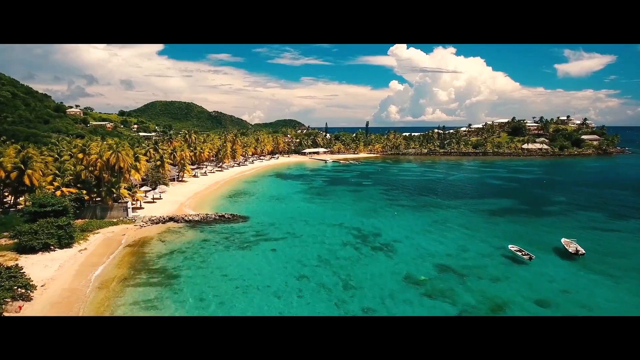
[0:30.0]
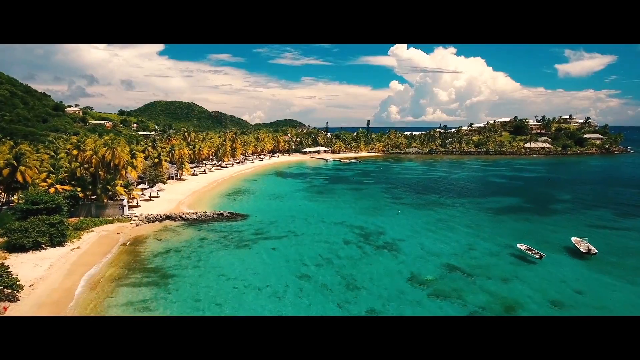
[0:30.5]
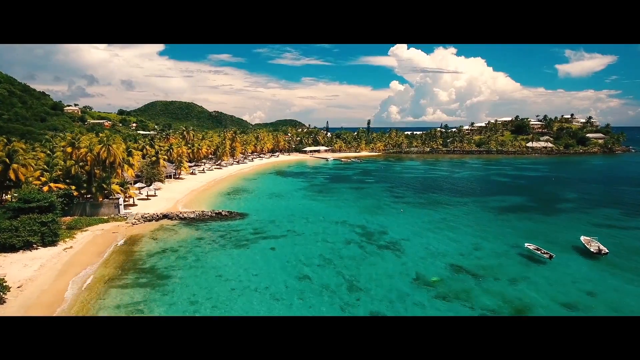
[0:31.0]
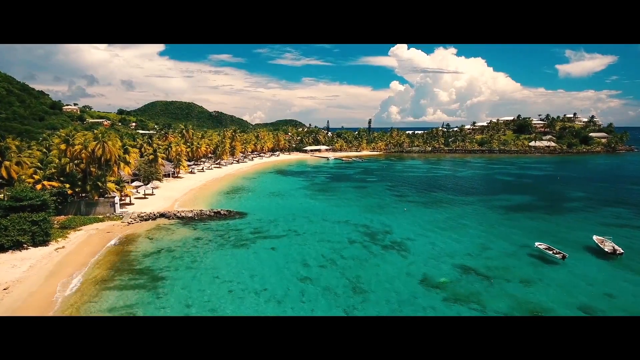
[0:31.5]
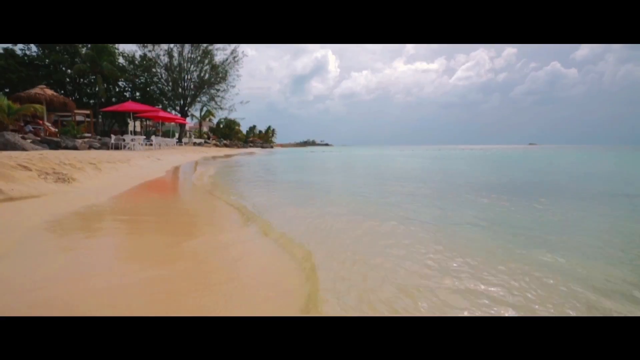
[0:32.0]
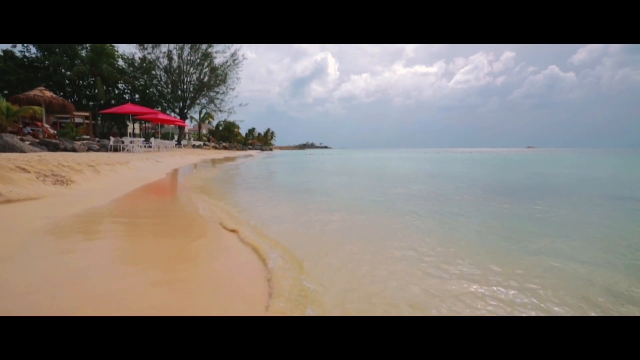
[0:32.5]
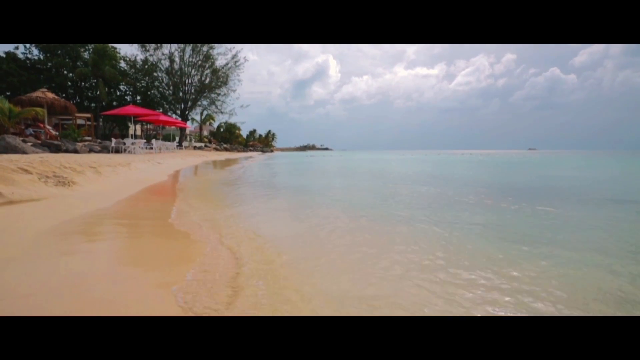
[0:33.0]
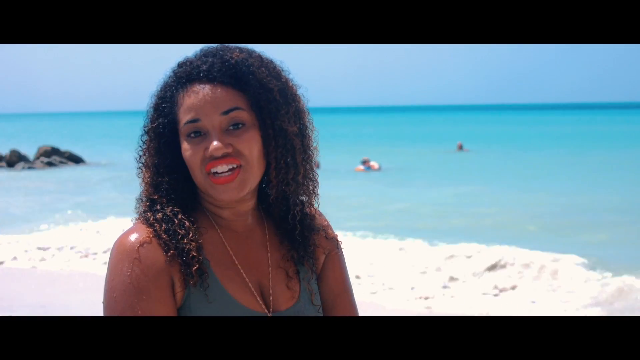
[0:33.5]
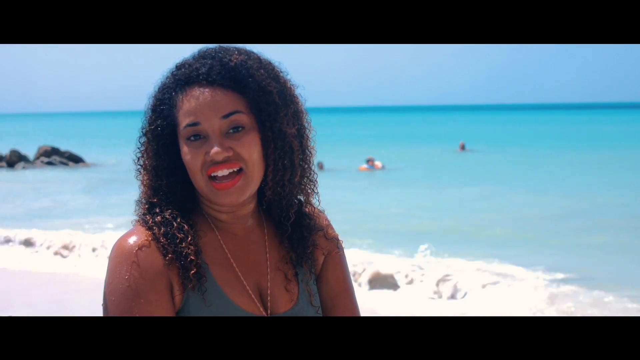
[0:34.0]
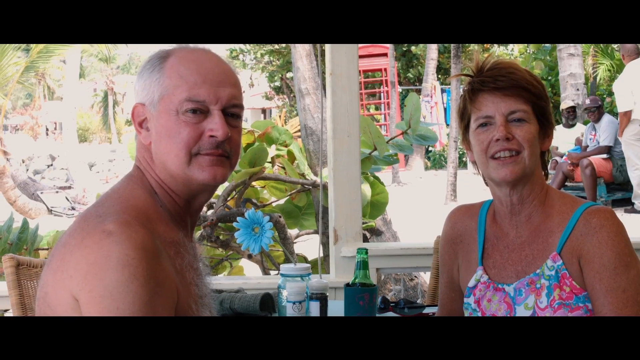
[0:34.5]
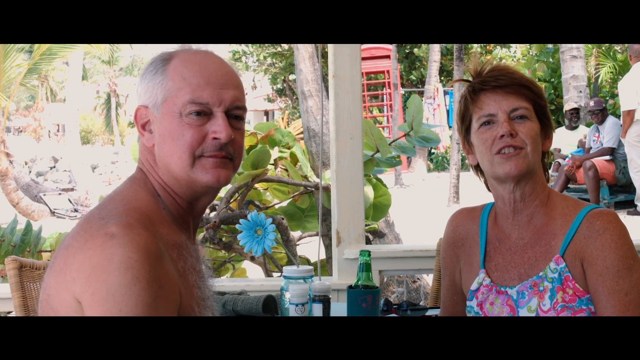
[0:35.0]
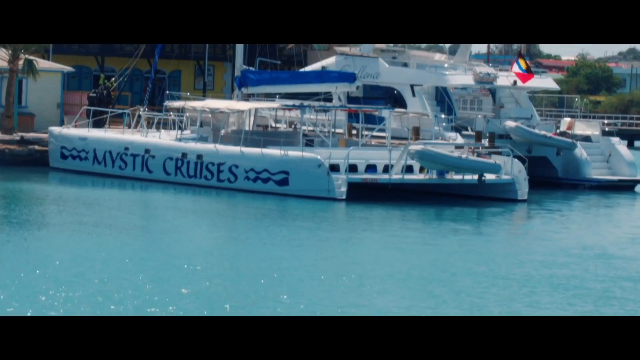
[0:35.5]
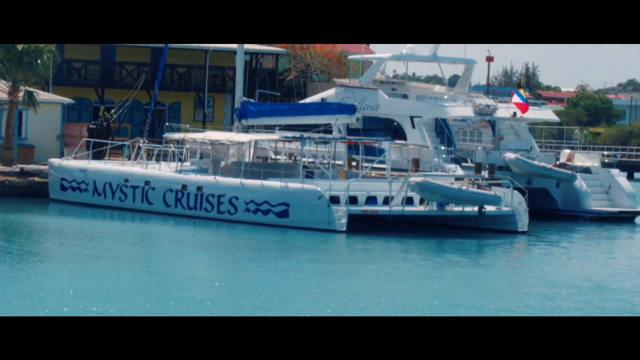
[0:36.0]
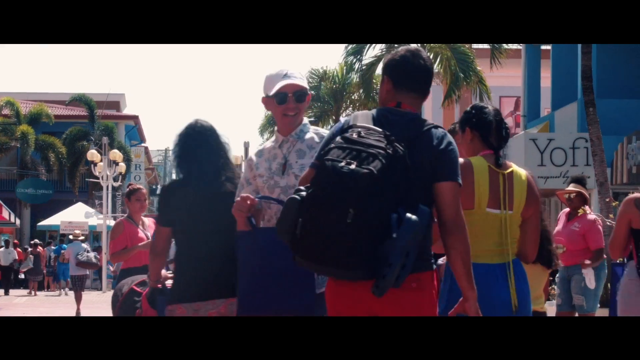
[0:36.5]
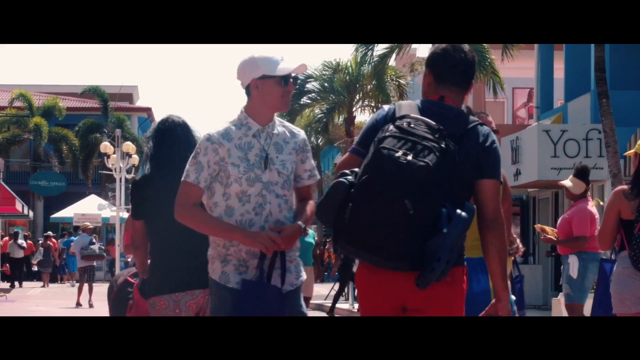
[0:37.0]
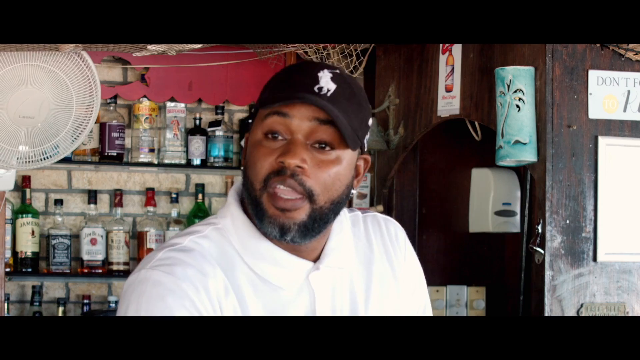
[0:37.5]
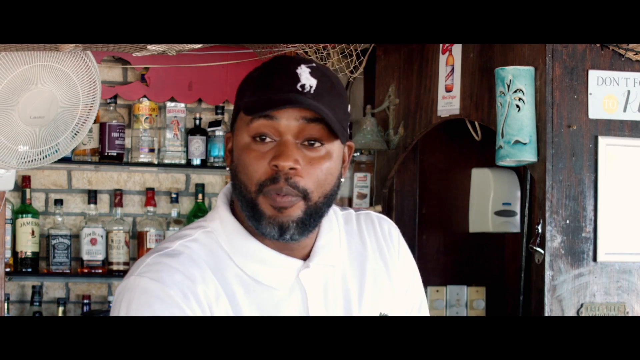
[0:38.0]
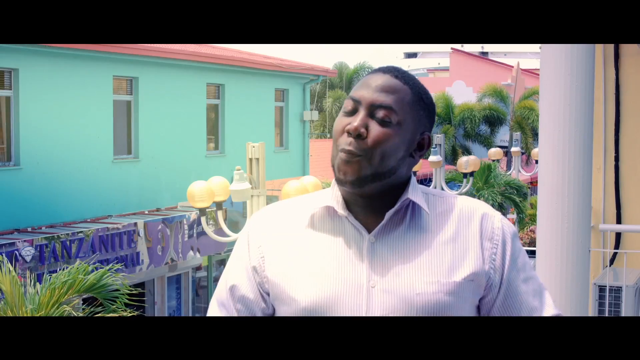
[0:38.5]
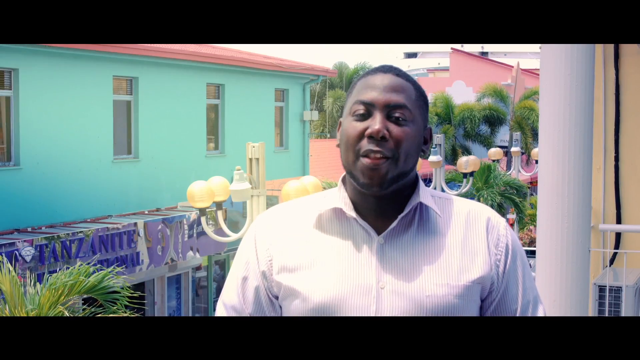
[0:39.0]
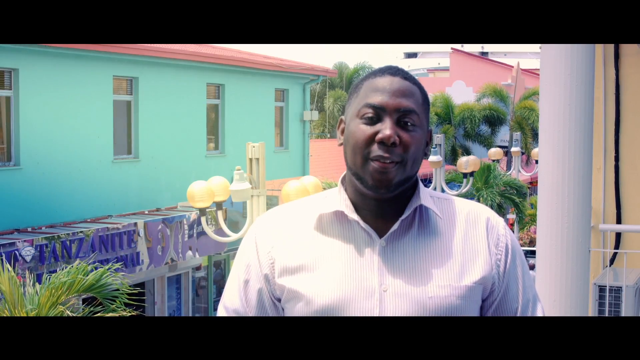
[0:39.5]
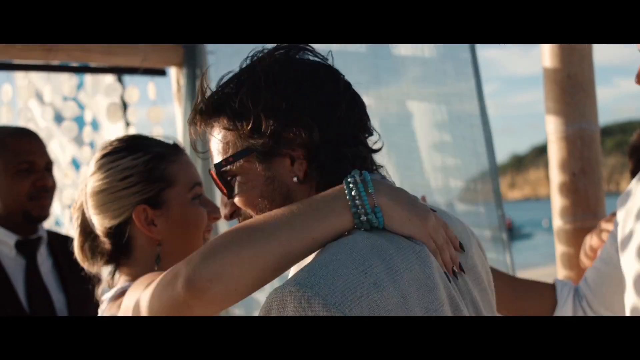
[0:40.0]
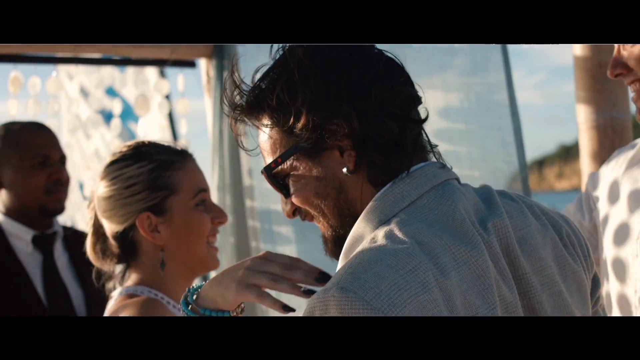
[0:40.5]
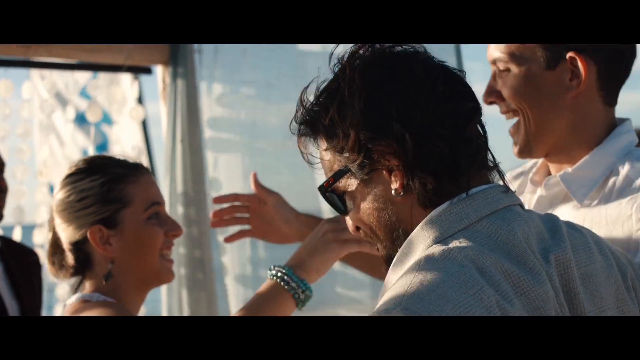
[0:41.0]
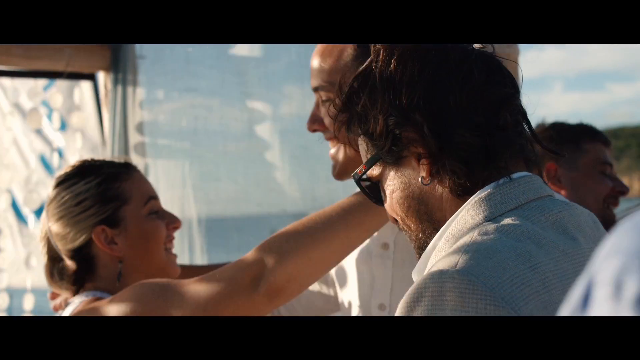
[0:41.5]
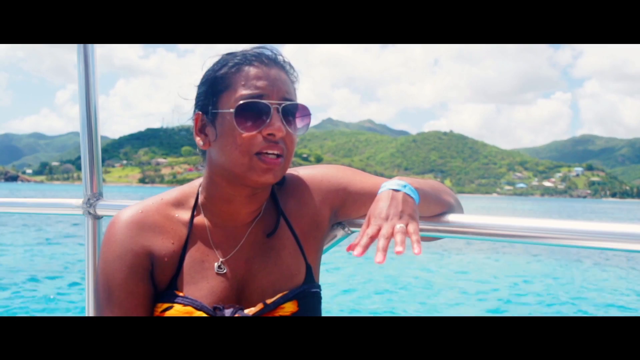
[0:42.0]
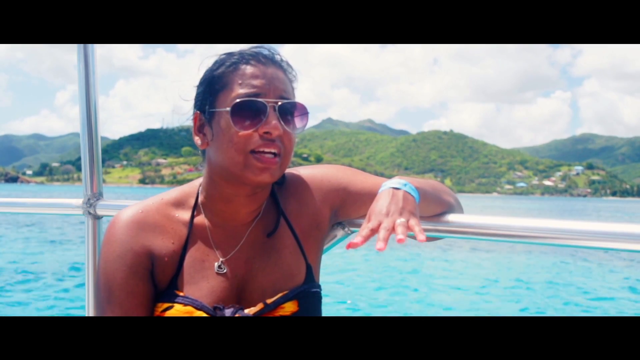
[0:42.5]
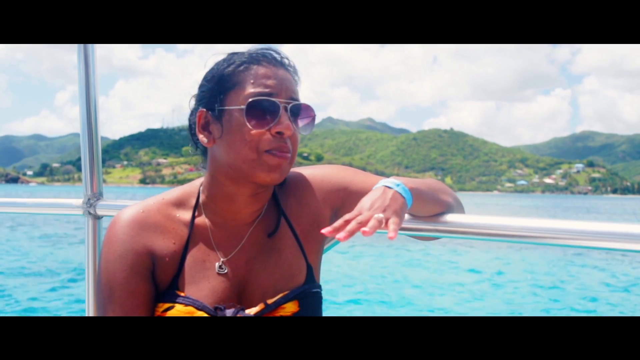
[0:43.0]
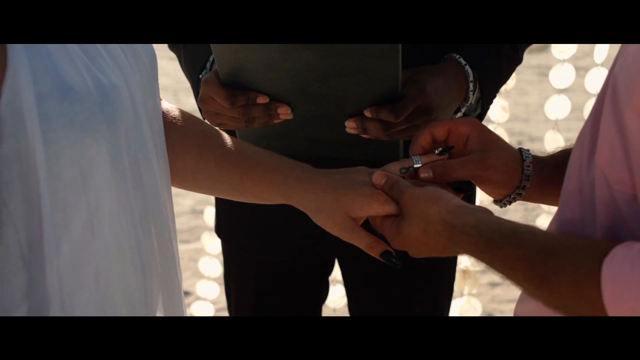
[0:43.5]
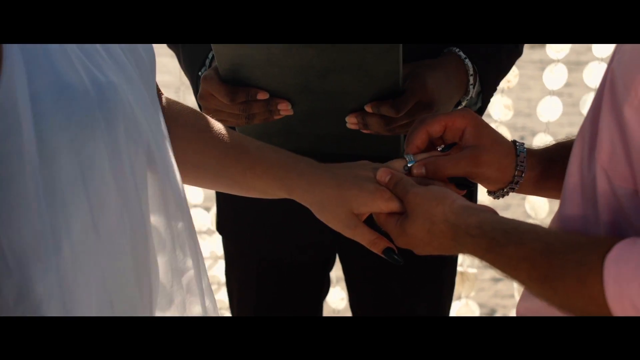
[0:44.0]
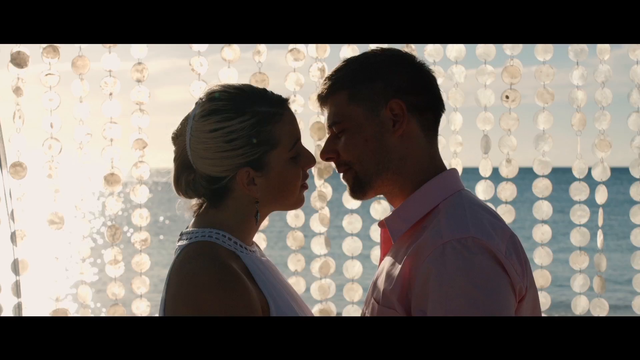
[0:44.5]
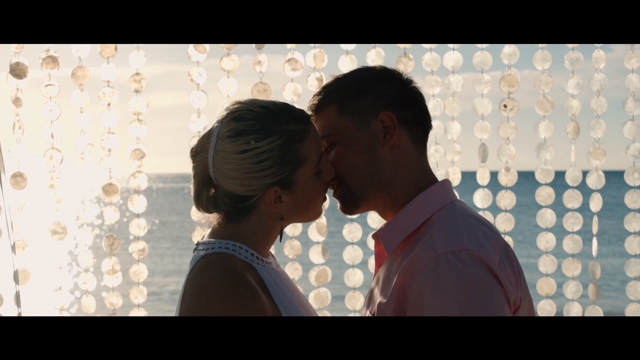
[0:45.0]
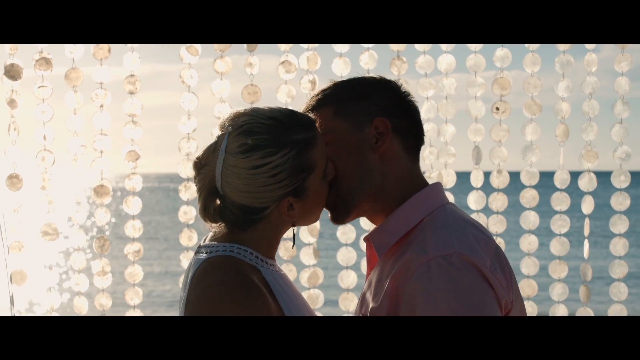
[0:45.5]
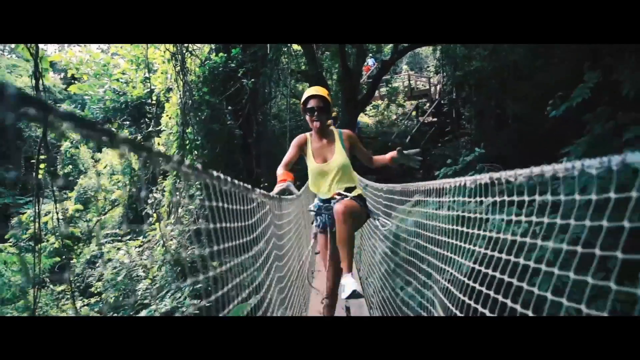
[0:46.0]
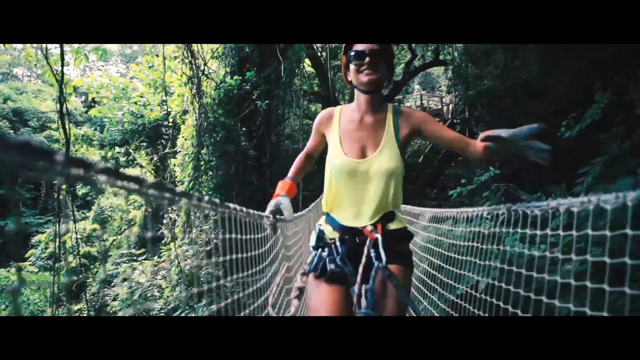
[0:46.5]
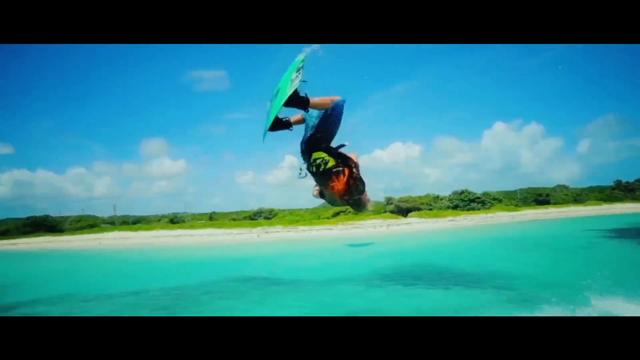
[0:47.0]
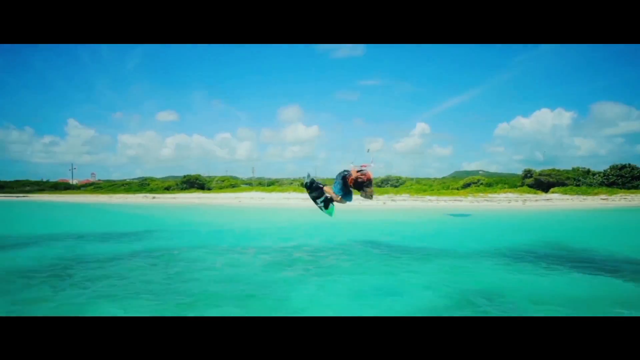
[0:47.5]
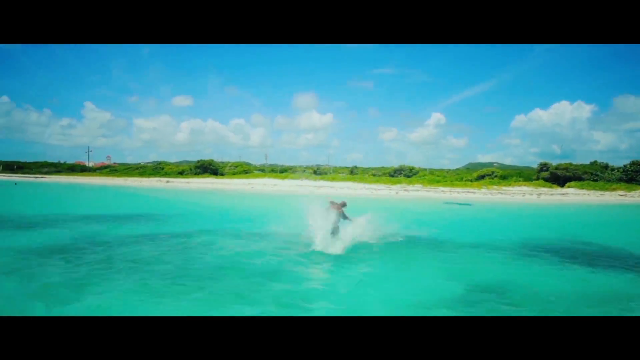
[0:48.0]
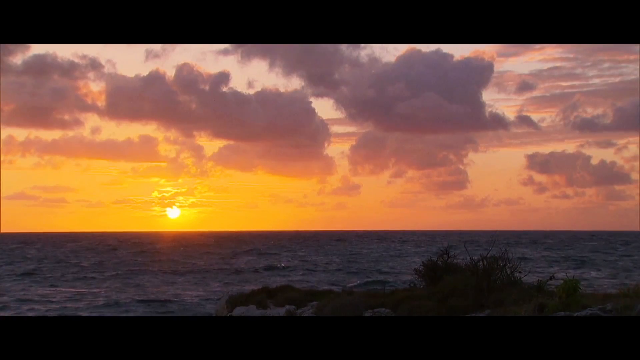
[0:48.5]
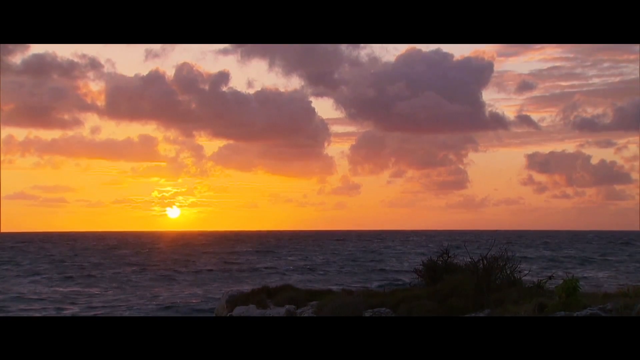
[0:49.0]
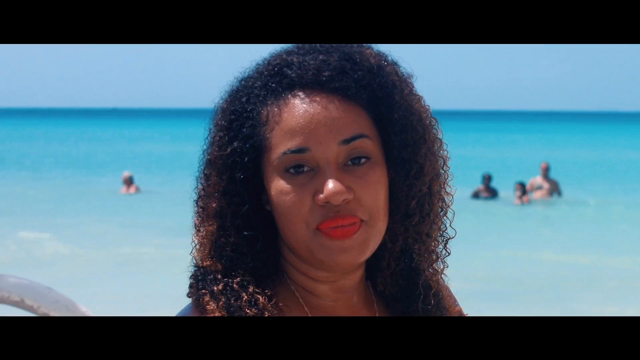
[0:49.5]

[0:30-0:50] A Caribbean island shore appears with blue tropical water, sand, palm trees along the edge, and two boats in the water. The video moves through multiple scenes, including the sand on the shore and a black woman with a necklace around her neck talking to the camera. Two white people in their 50s sit with drinks behind them, talking to the camera: a shirtless male on the left and a female in beachwear on the right. Boats appear, including one that says "mystic cruises." People walk in a street. A black man who works behind a counter selling alcohol wears a white shirt buttoned all the way up and a black cap with a white polo player logo; there is a fan to the left. Another black man in a button-up shirt talks, with a building several stories tall, with a green second floor and a red roof, on the other side of him. Two Caucasian people dance; the man wears sunglasses and an earring in his left ear, and the woman also wears an earring. They hug different people. A woman on a boat talks to the camera. A couple exchanges vows, the one on the right putting the ring on the one on the left; the person on the left is female and the person on the right appears to be male. Two people kiss after saying their vows. A woman in harness climbing and zip-line gear, a yellow tank top, black shorts and gloves runs along a bridge. Someone wakeboarding does a flip and lands on the other side. The sun sets in the distance under a pink and orange sky.